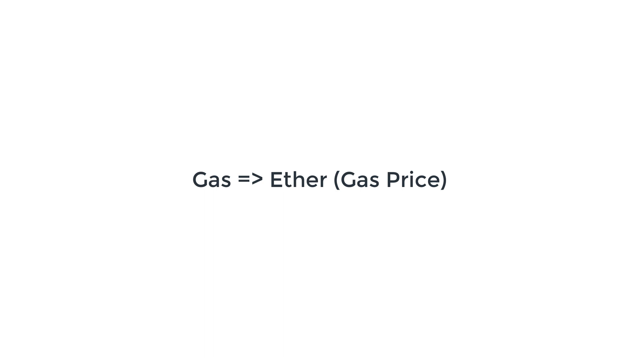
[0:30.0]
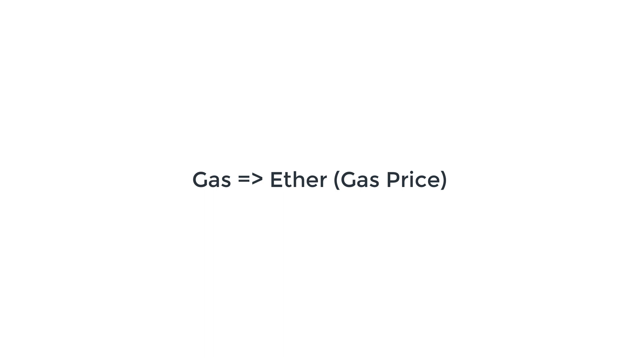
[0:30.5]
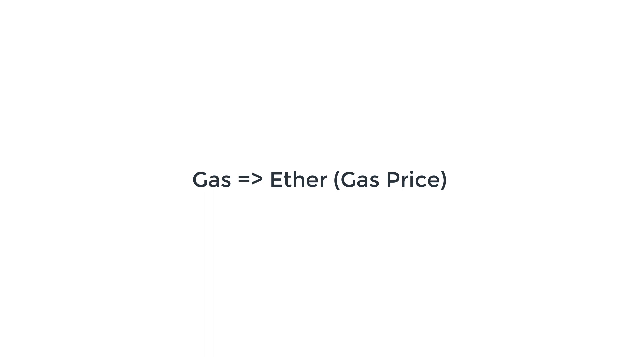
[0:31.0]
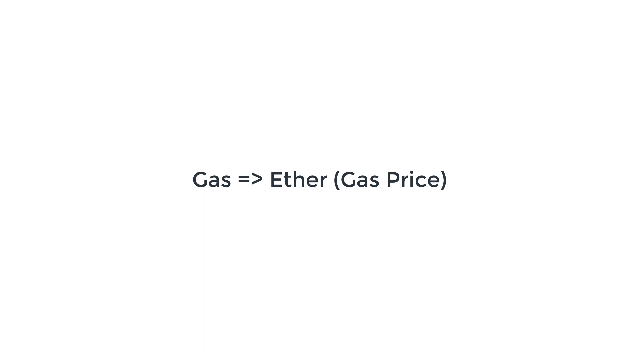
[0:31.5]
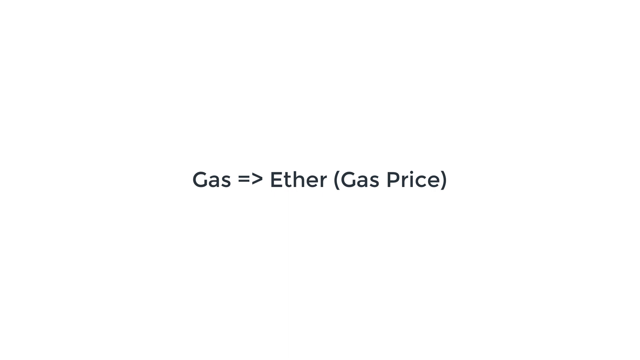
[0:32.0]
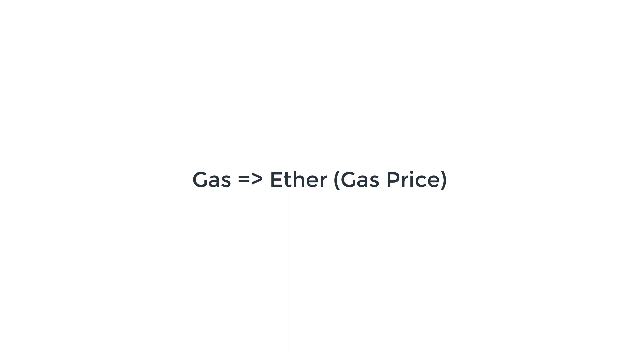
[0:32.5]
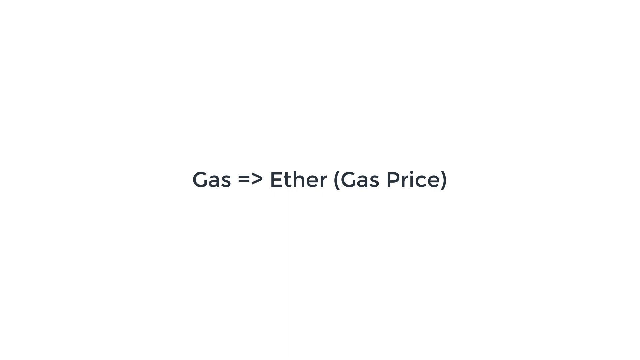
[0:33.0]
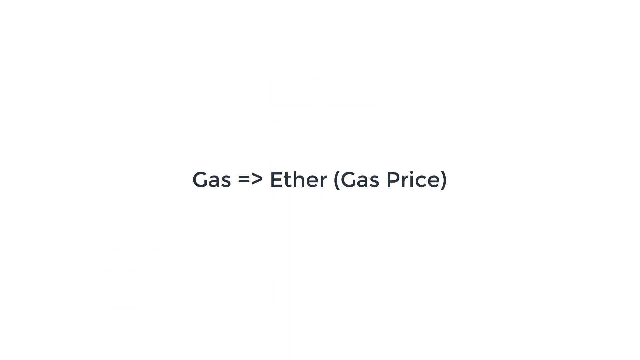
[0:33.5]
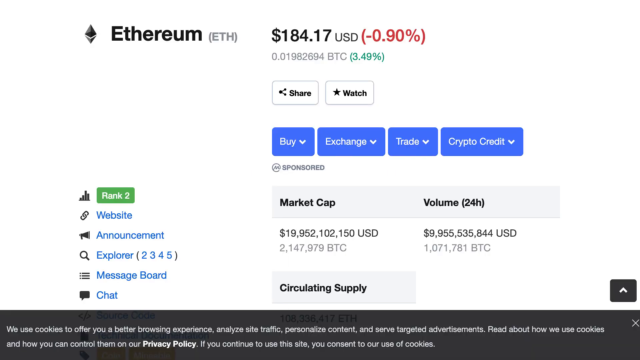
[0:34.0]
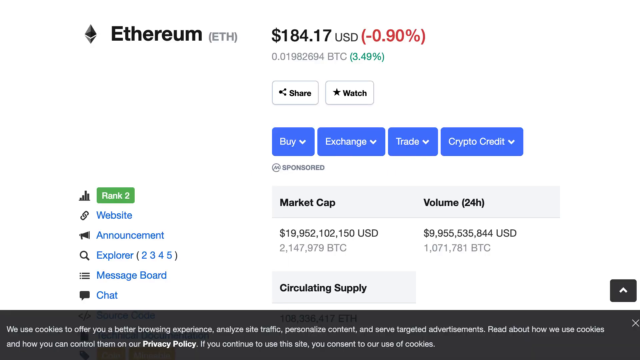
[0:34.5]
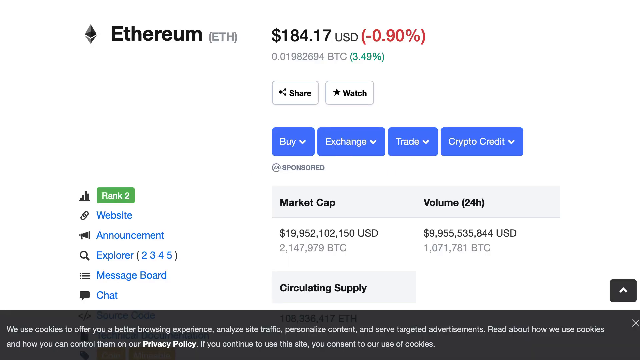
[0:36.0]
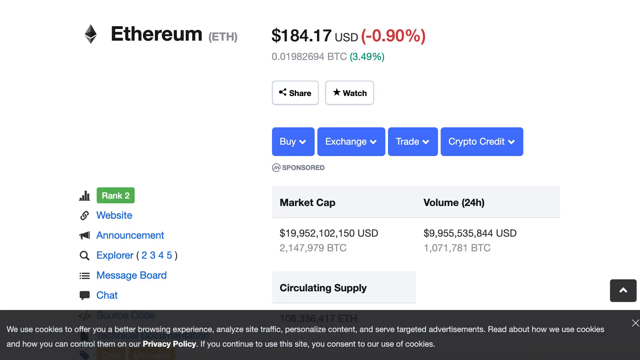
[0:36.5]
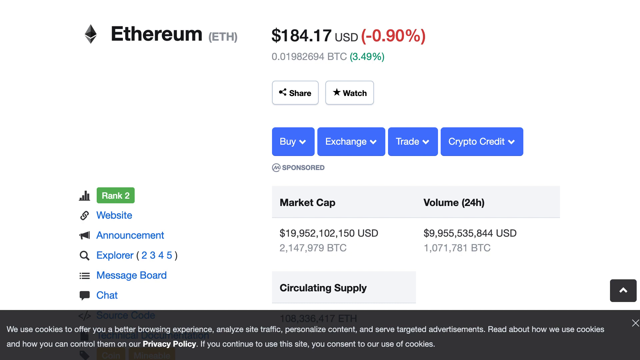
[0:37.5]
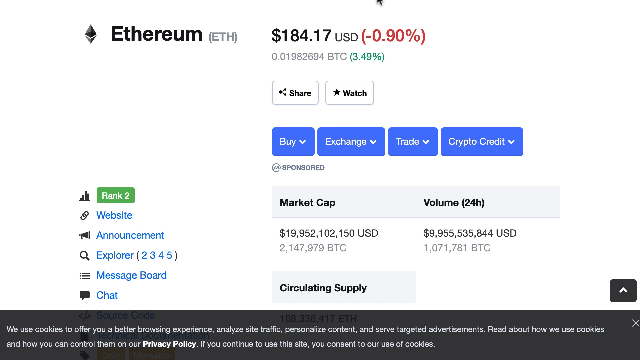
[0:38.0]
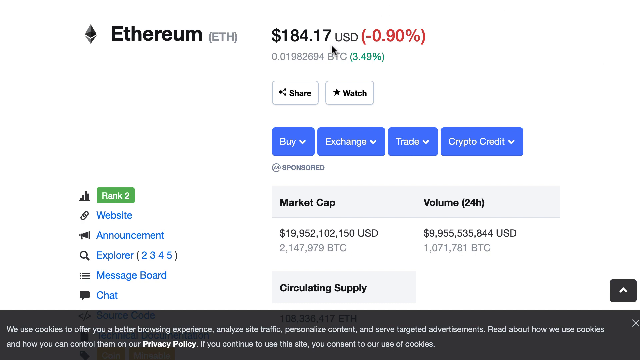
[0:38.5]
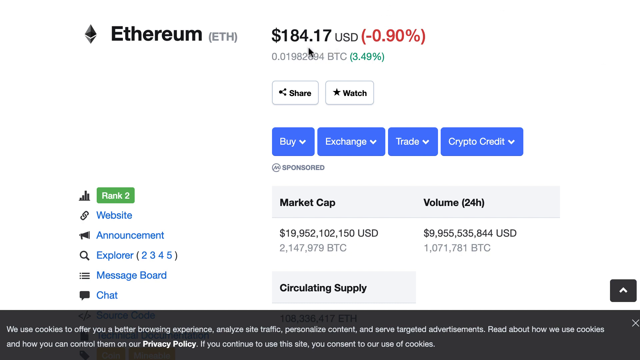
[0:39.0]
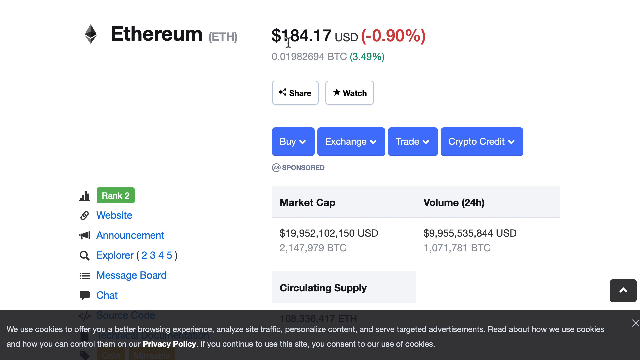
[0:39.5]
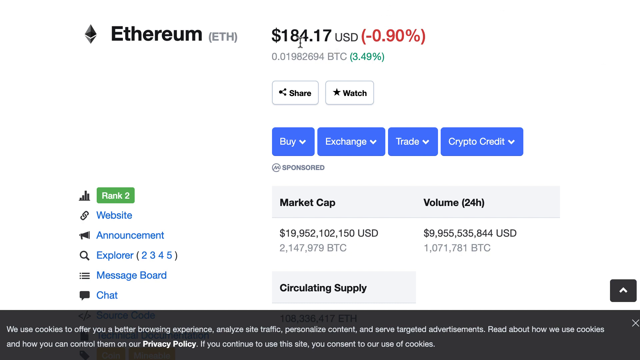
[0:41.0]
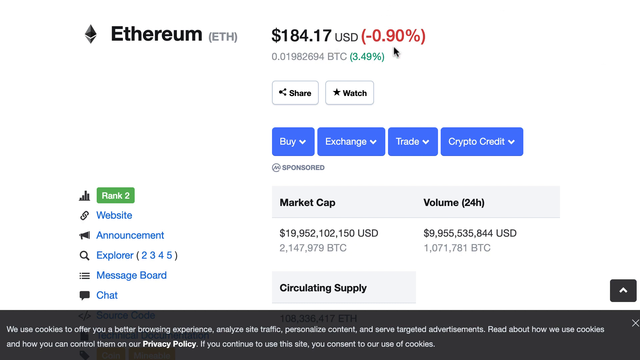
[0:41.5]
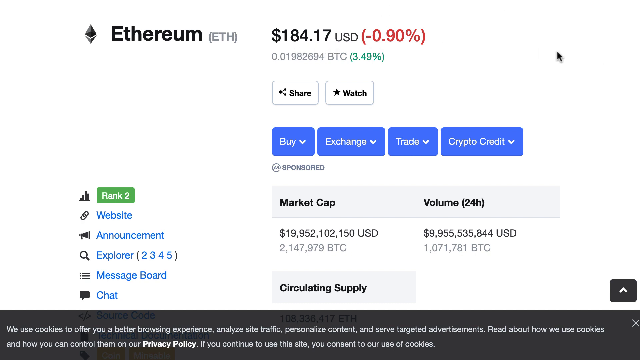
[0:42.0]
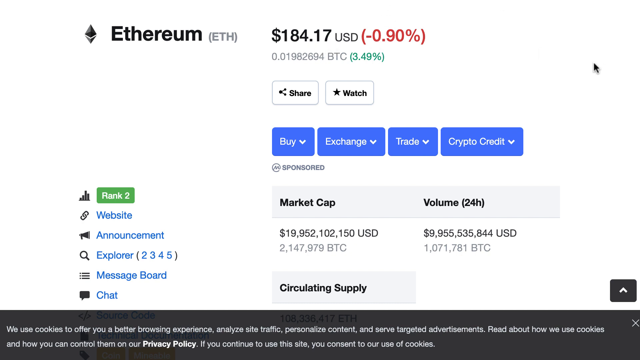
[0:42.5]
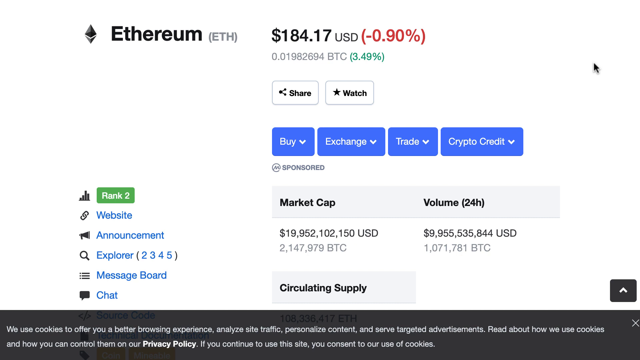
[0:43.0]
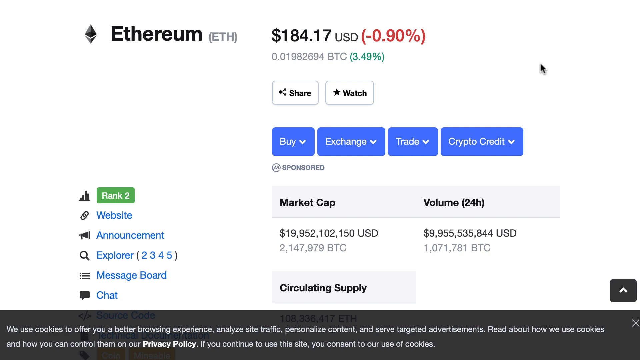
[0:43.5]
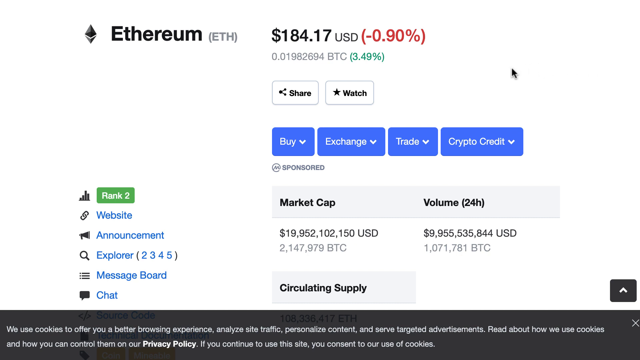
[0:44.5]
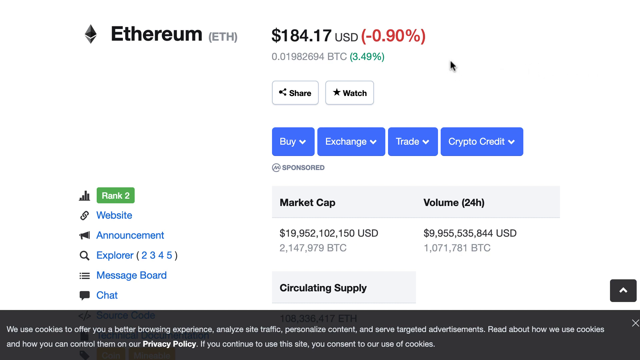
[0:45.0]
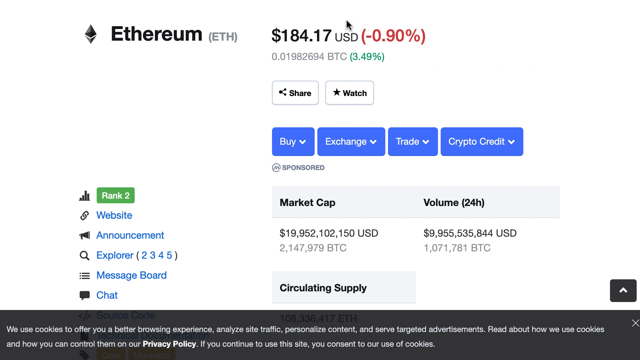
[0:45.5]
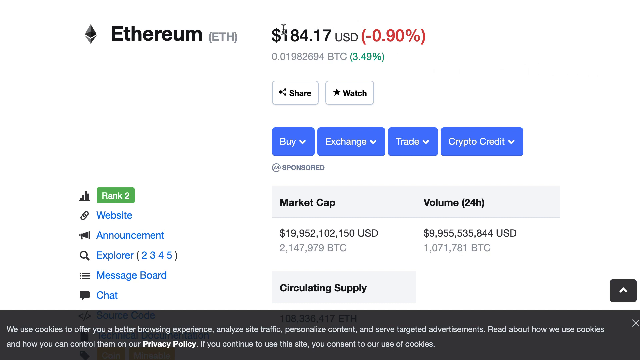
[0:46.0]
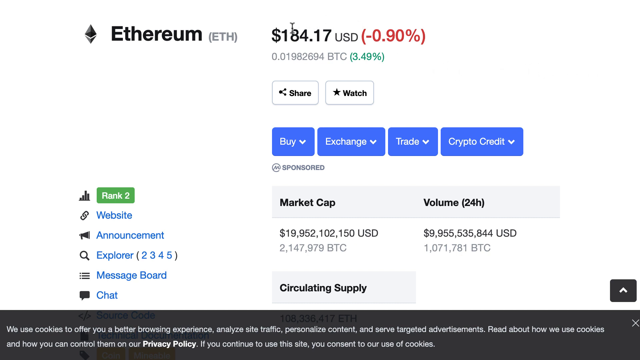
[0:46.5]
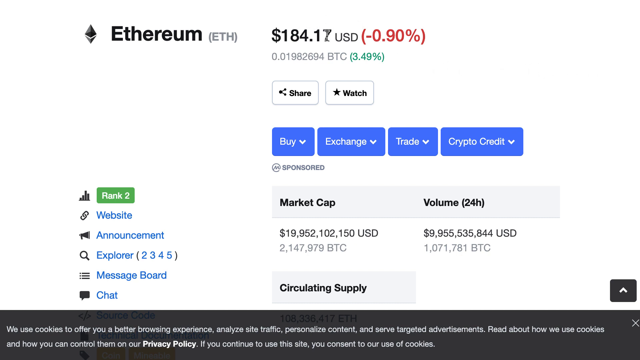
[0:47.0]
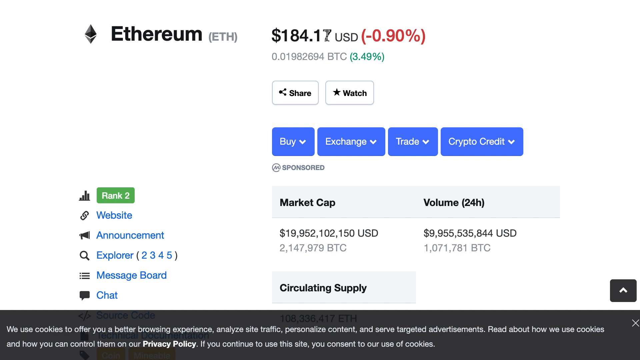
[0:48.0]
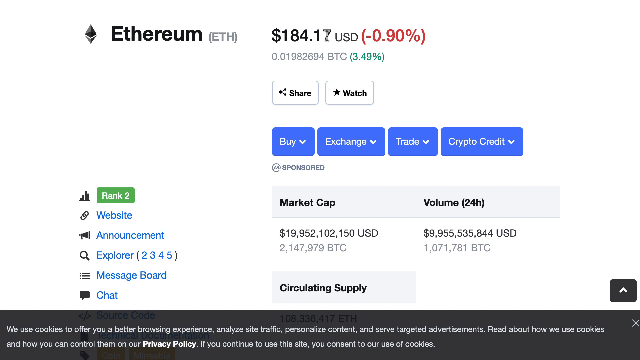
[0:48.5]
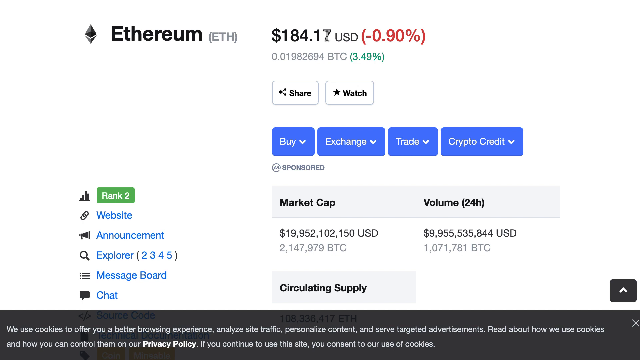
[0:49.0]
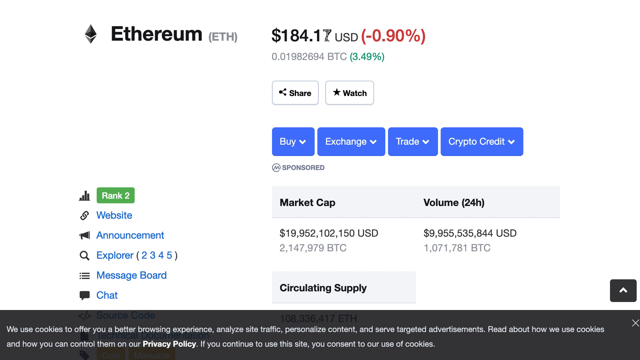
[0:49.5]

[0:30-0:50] On a blank white background, words and sentences appear in the middle, starting with "gas => ether" and then "gas price". Next a page appears with "ethereum ETH" as a black word in the top portion. It gives a price of $184.17 USD, with "-.90%" in parentheses, along with a few other numbers. There are buy, exchange, trade and crypto credit buttons, plus many numbers, including "rank 2" in the lower portion. A cursor moves around the price of $184.19, then goes down to the red "-0.90%".